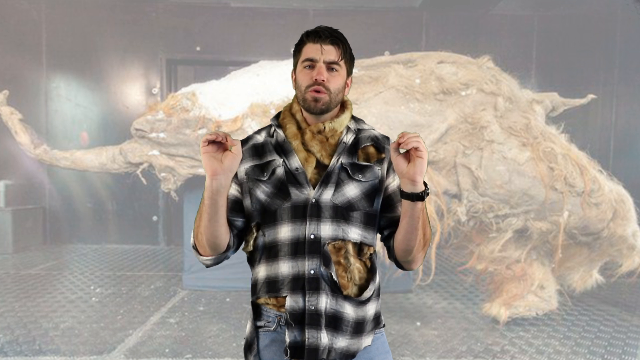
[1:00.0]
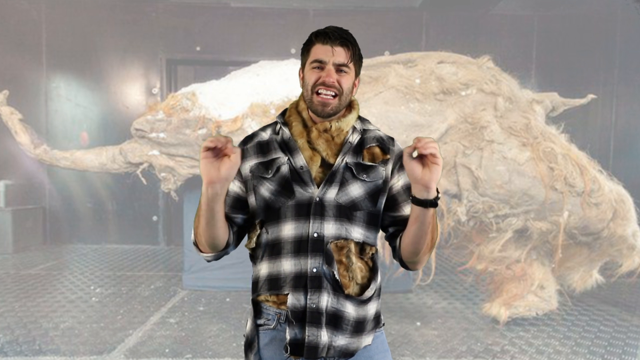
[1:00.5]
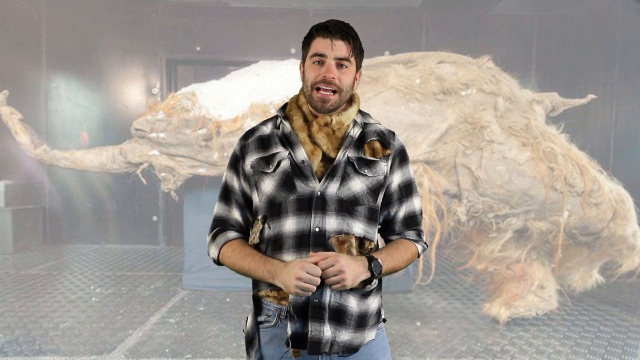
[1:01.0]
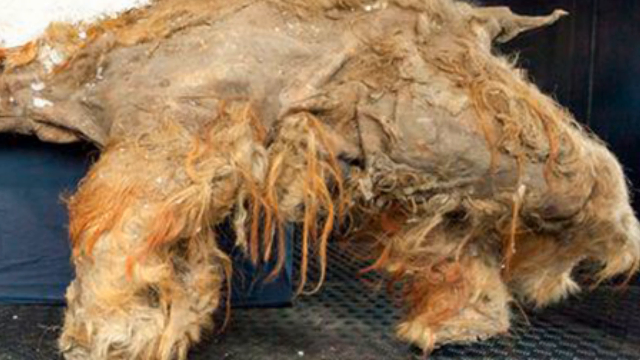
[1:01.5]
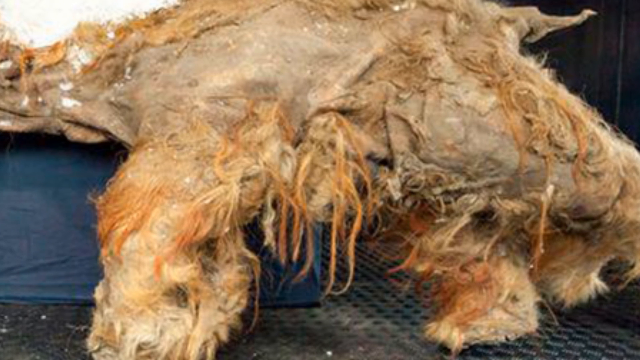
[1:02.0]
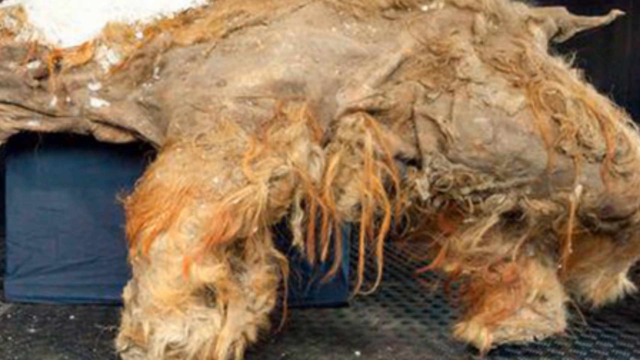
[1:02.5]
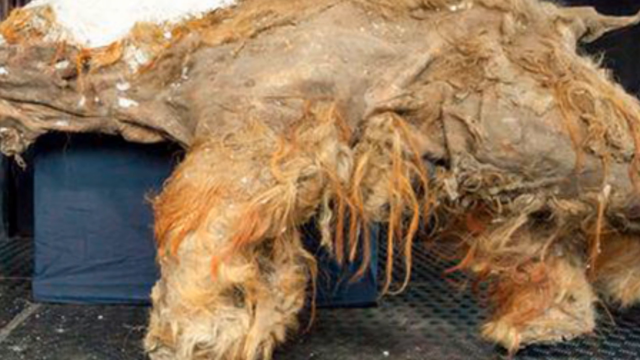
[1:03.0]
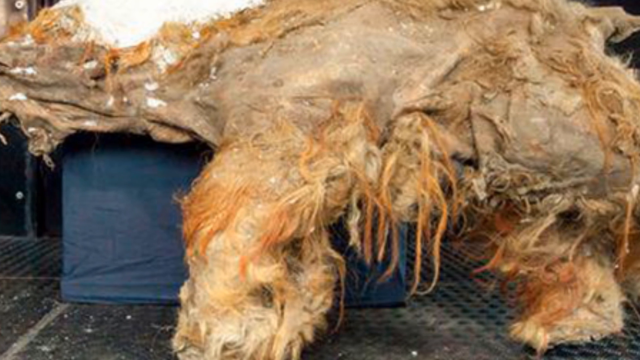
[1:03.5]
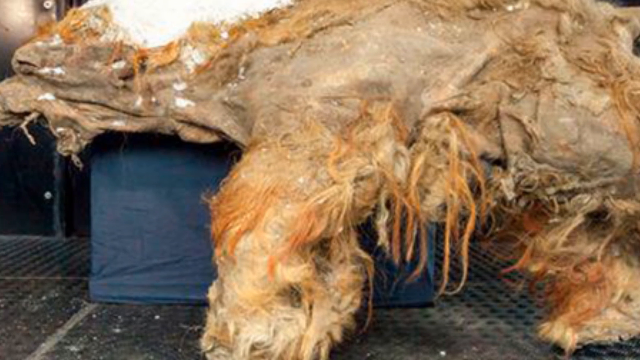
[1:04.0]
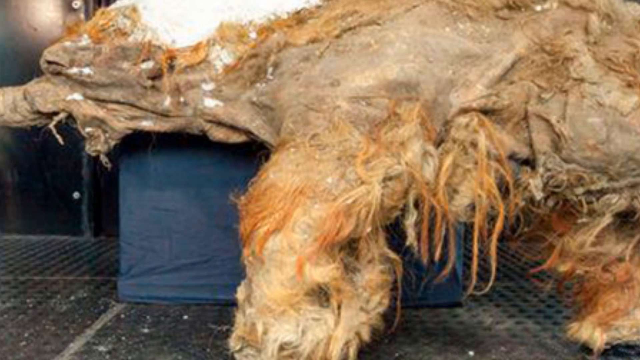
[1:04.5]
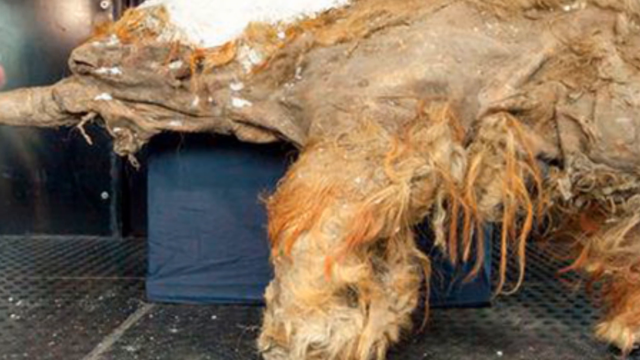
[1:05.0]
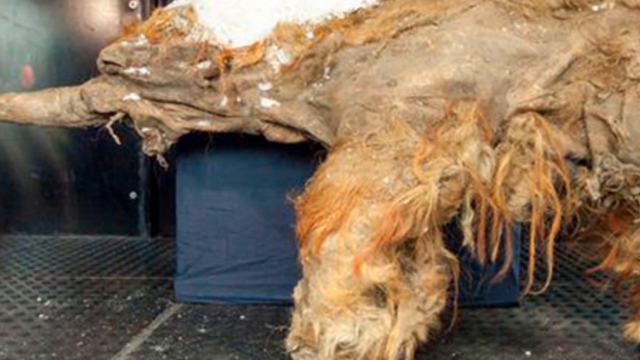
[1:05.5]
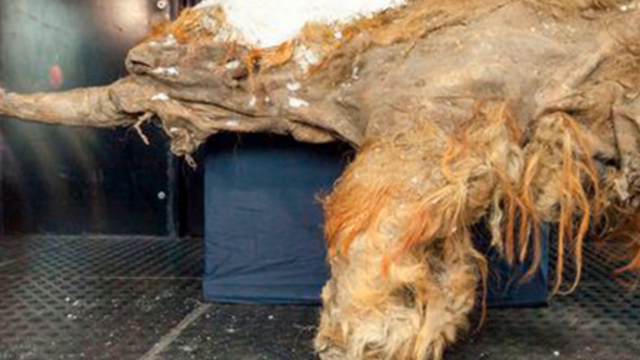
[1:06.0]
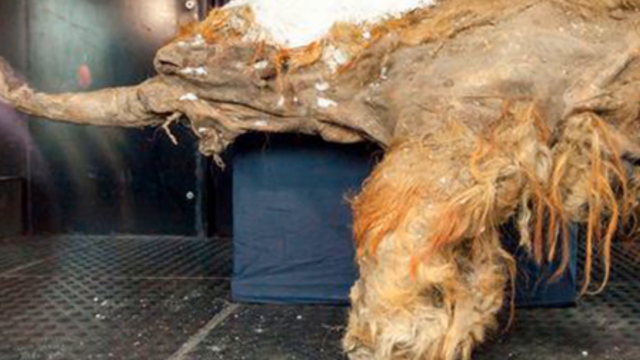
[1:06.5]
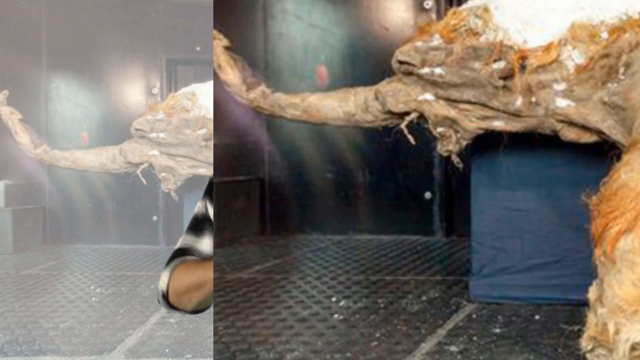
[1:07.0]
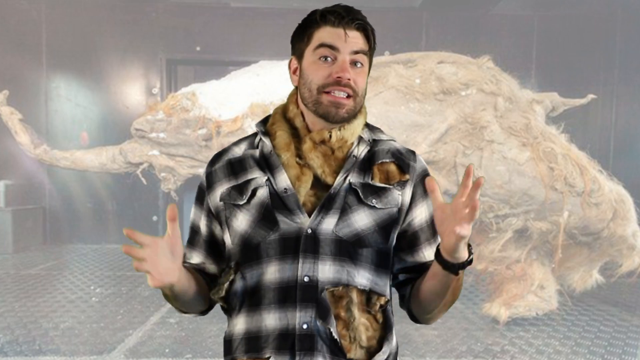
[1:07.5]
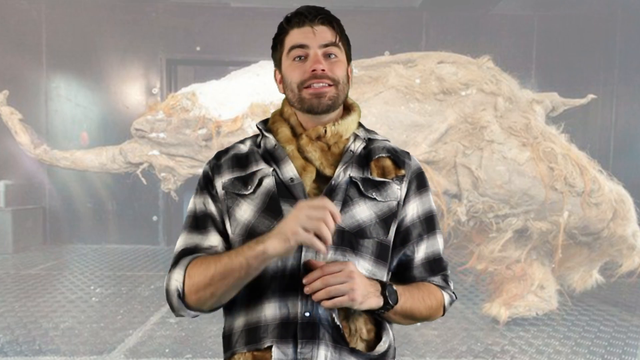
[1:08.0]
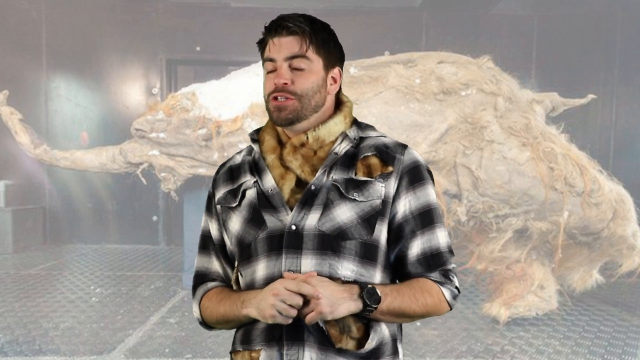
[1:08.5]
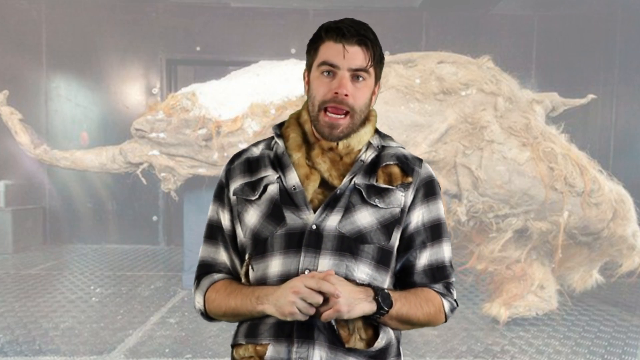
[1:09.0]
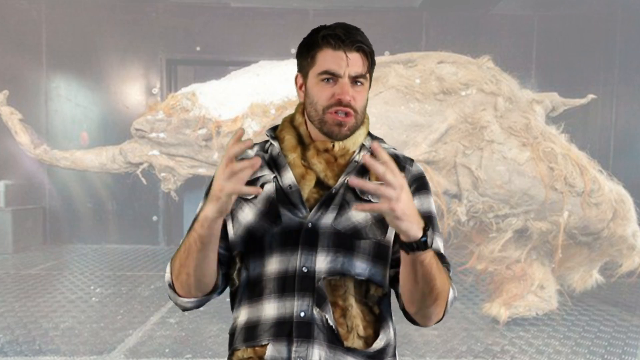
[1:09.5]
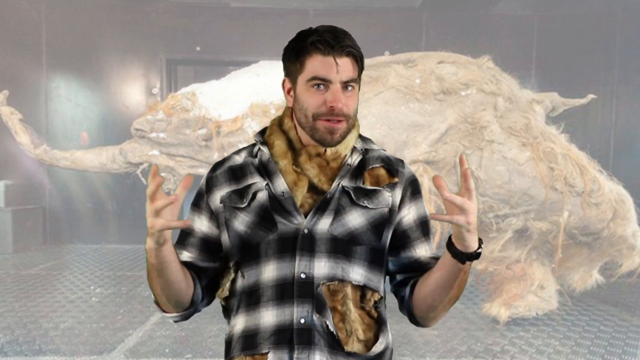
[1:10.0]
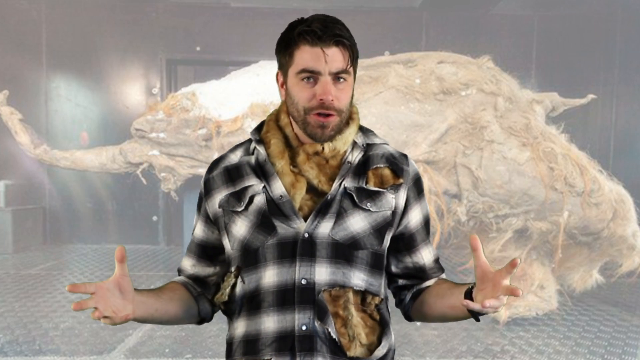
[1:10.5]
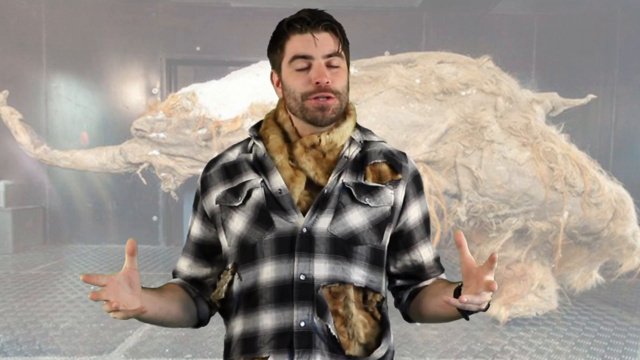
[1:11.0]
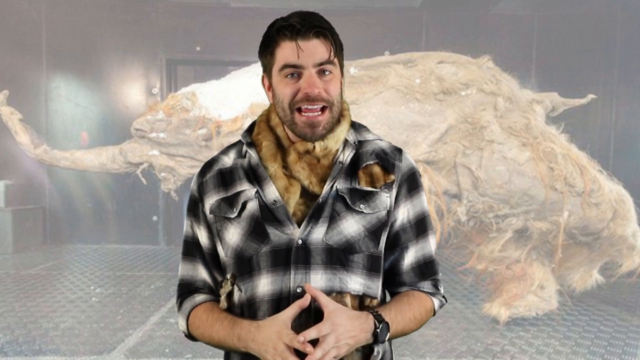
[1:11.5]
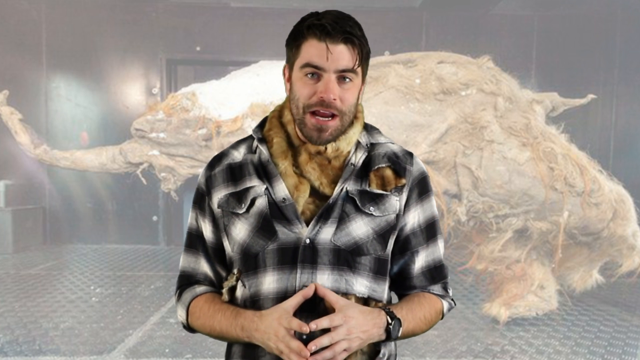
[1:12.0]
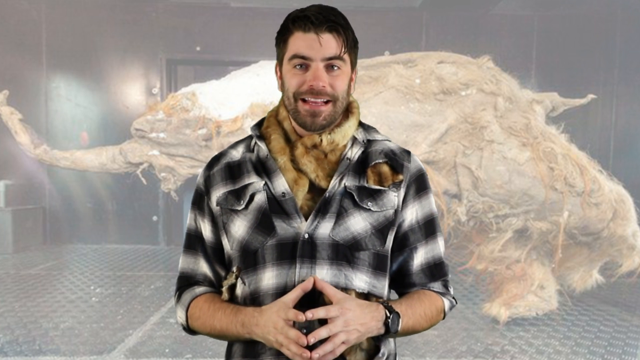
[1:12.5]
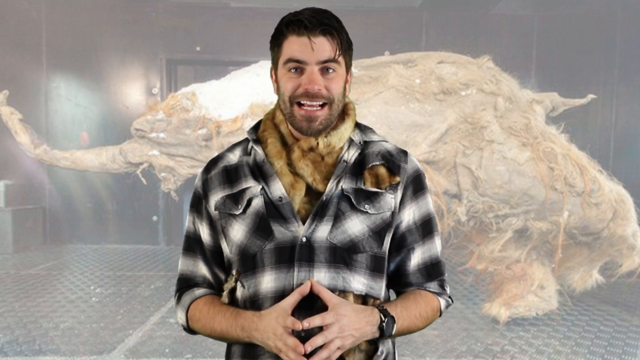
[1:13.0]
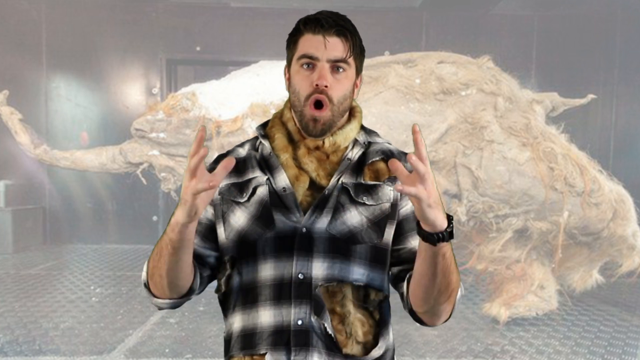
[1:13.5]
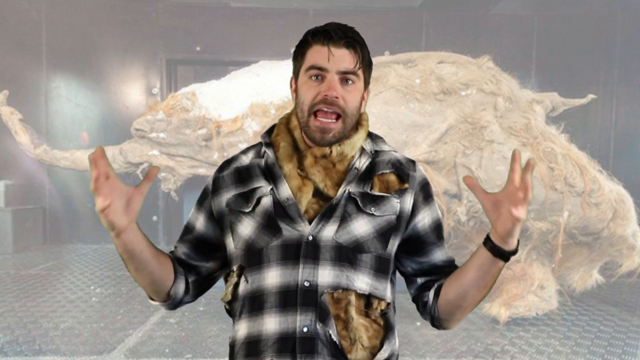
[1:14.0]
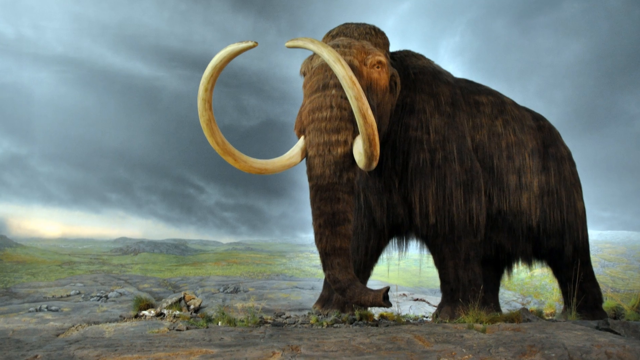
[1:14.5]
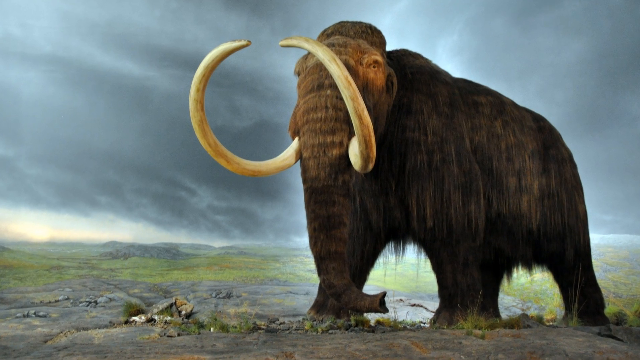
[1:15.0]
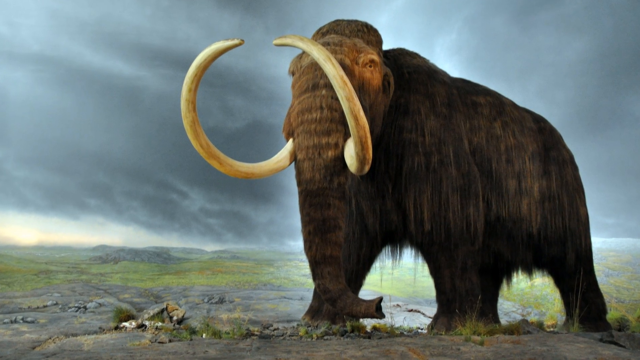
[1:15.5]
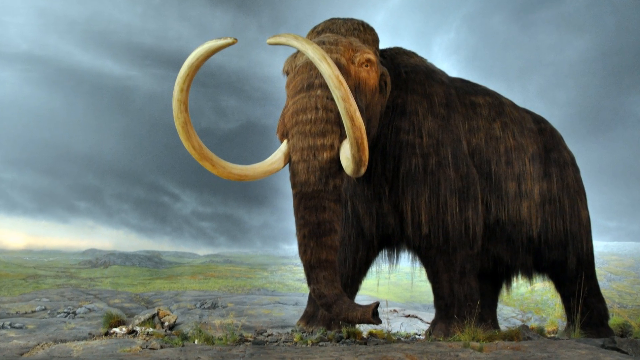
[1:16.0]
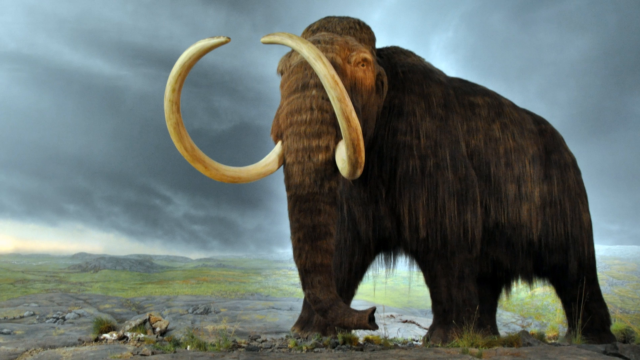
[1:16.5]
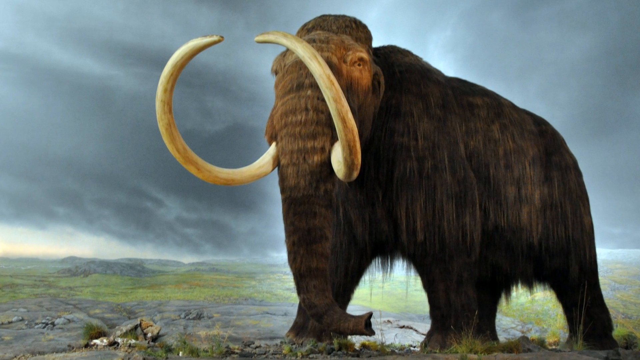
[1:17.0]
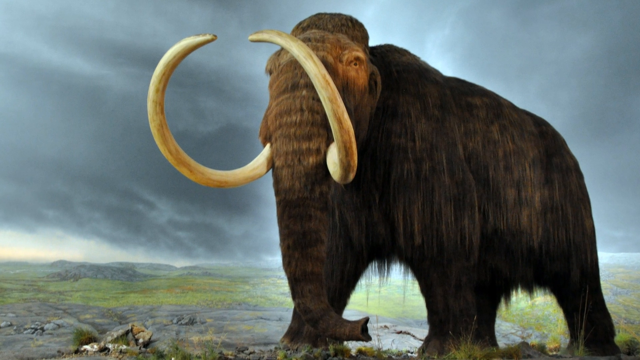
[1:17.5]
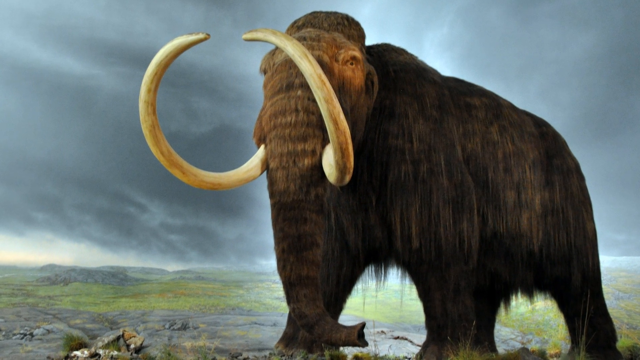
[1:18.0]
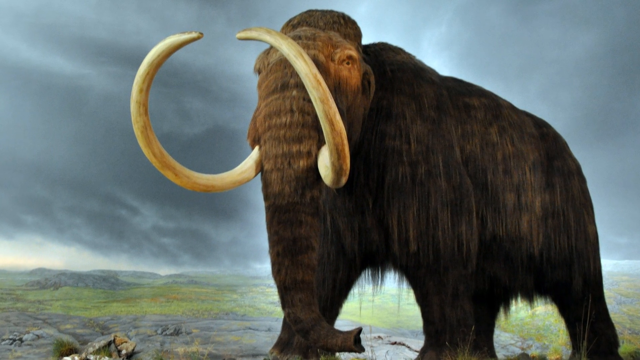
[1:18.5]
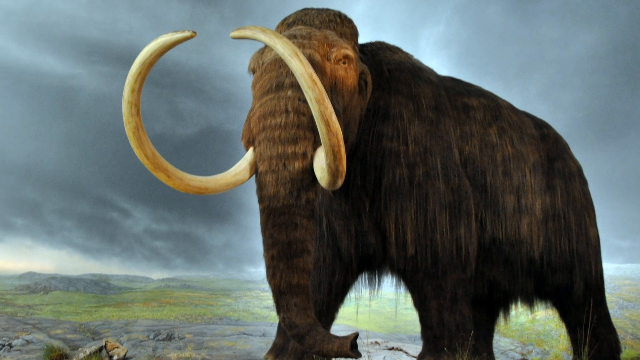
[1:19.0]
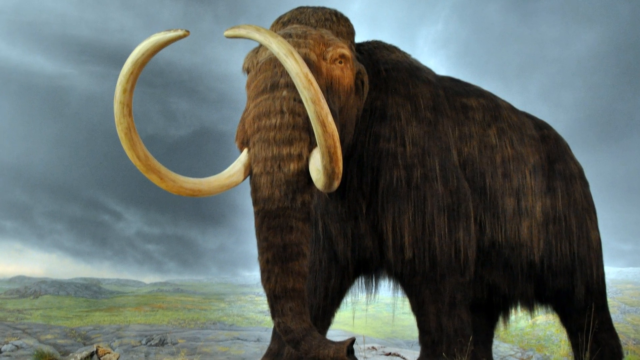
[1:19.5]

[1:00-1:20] A zoomed-in view shows the remains much better. It still has some tan and what could be called red fur on it, and there appears to be snow on it. The wrinkles in the skin are visible, and the eyes can be seen much better. The video cuts back to Michael, still using a lot of hand gestures, appearing very interested in what he is explaining. It then cuts to another image, apparently an artist's rendition of a woolly mammoth, possibly showing what its mother could look like. The woolly mammoth is hand-drawn, or at least done in a style that appears hand-drawn, and is very dark brown. Behind it is a very bad storm or a lot of clouds. There is a white glow around the mammoth's body but not around its tusks, and it appears to be in a grassy field of some kind with a few mountains in the background.